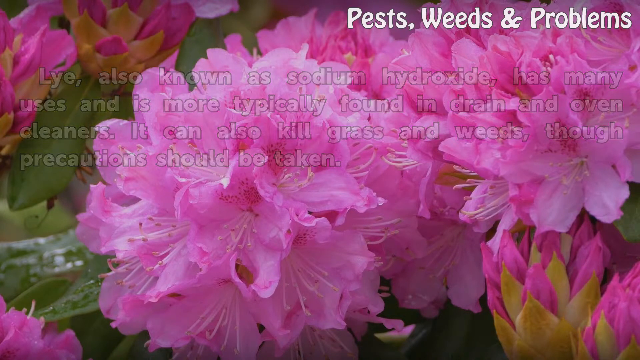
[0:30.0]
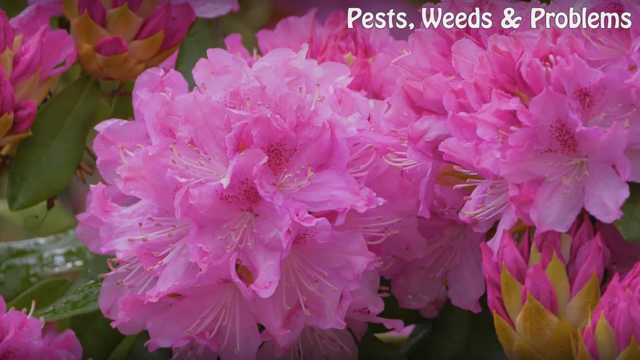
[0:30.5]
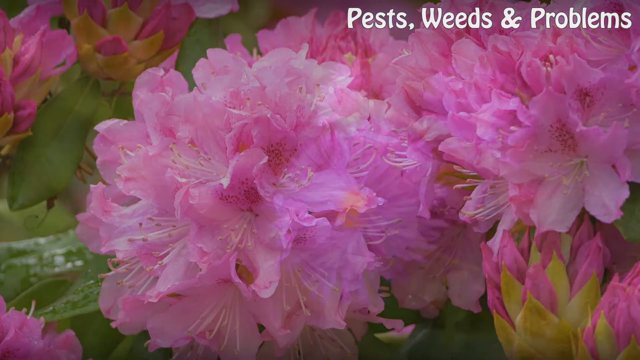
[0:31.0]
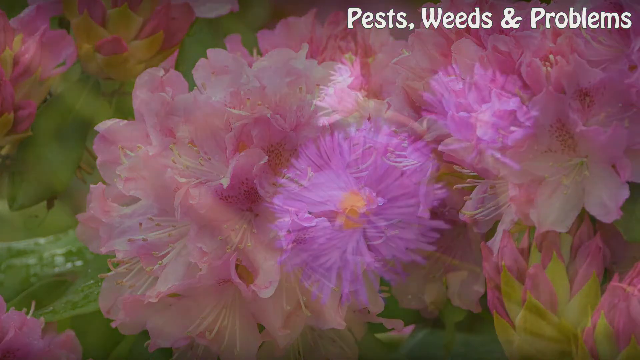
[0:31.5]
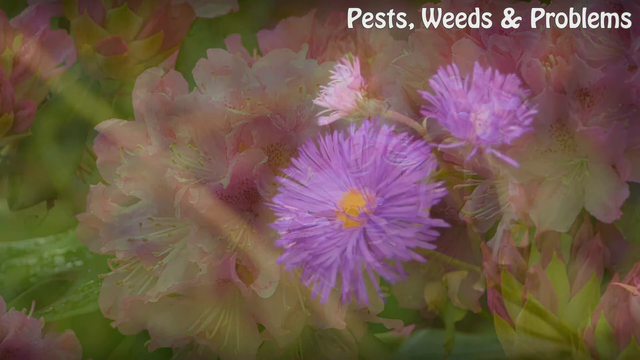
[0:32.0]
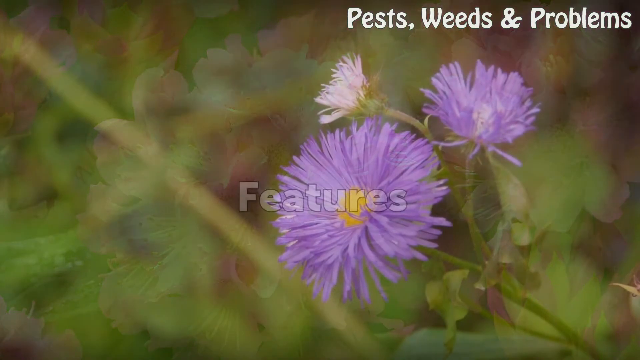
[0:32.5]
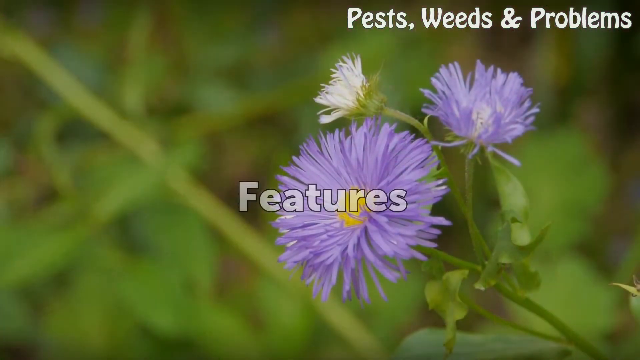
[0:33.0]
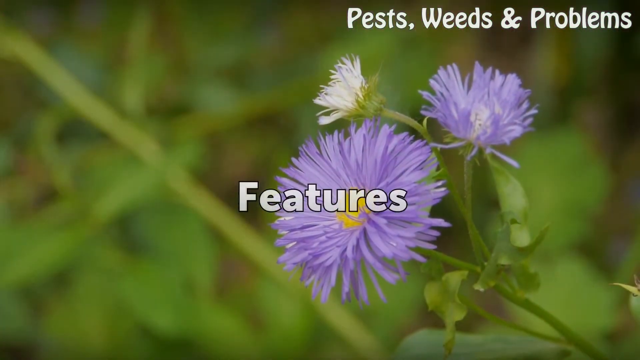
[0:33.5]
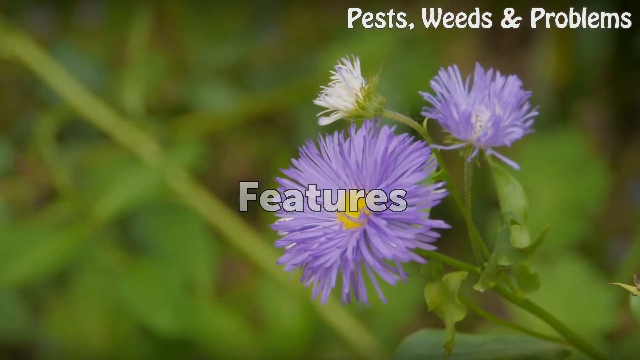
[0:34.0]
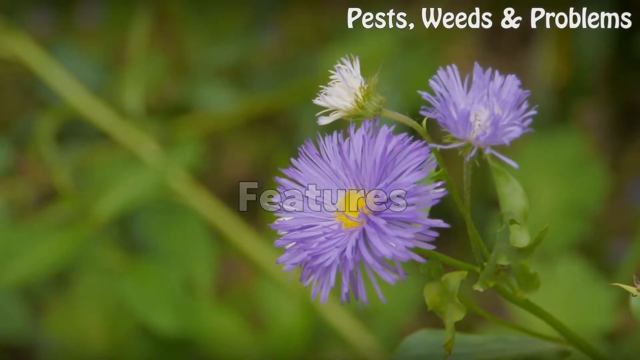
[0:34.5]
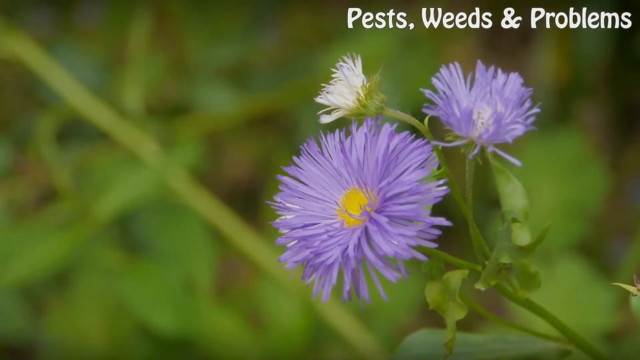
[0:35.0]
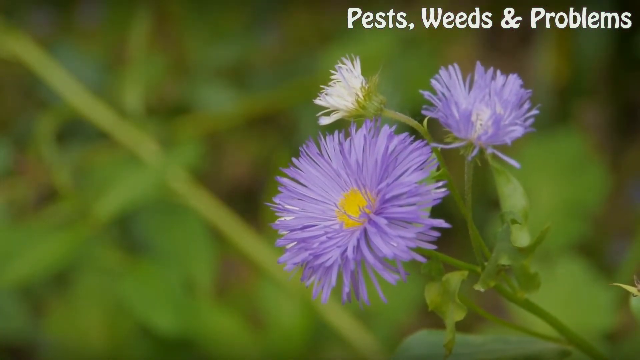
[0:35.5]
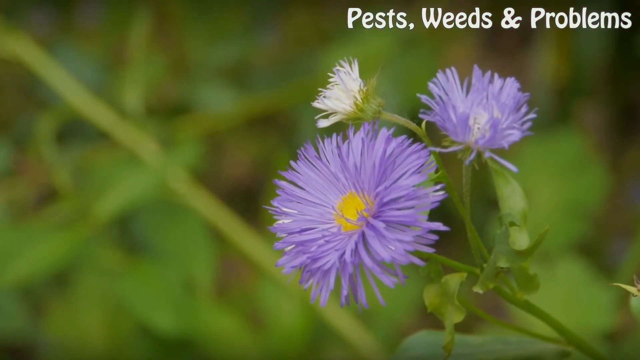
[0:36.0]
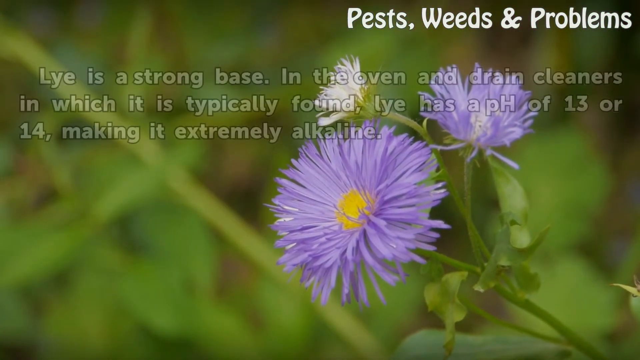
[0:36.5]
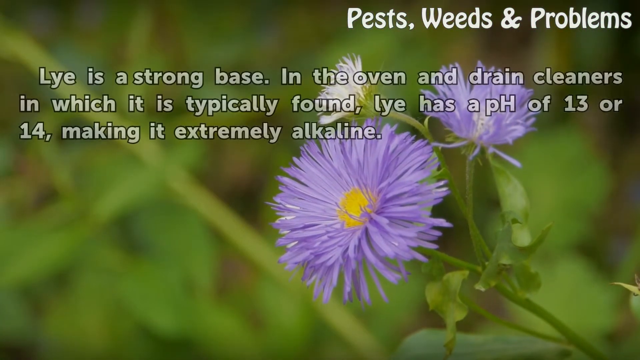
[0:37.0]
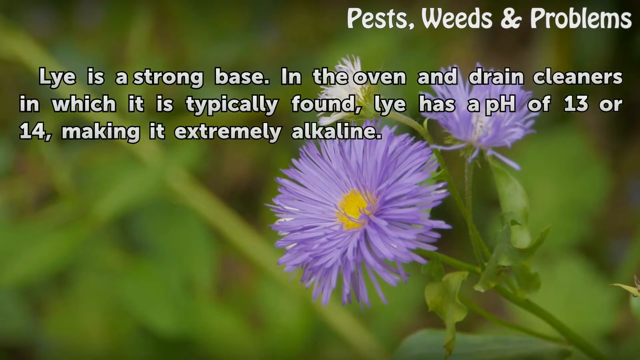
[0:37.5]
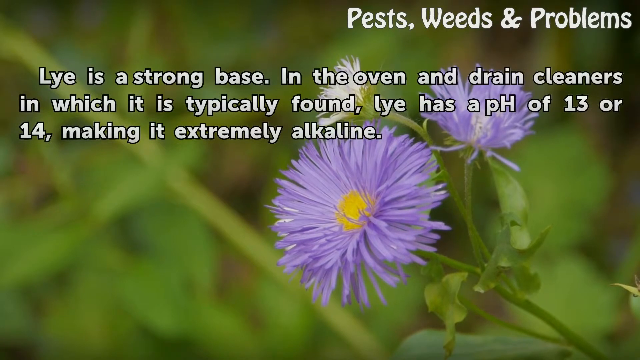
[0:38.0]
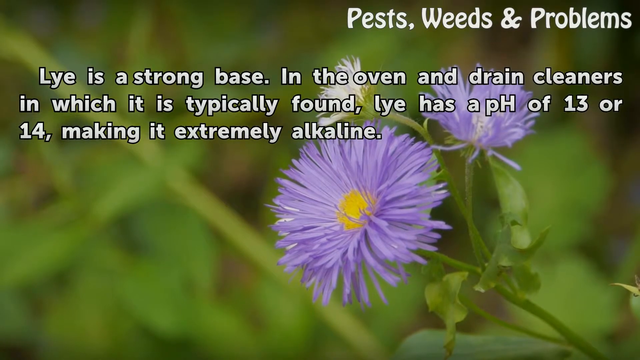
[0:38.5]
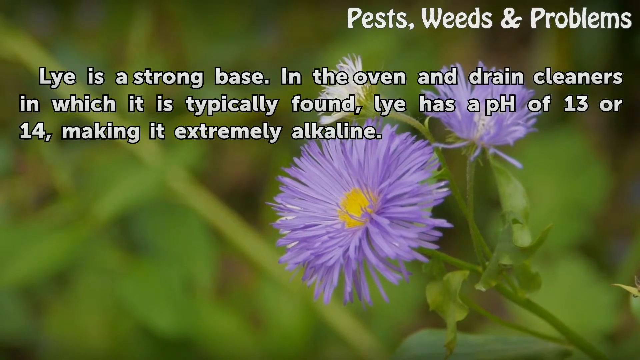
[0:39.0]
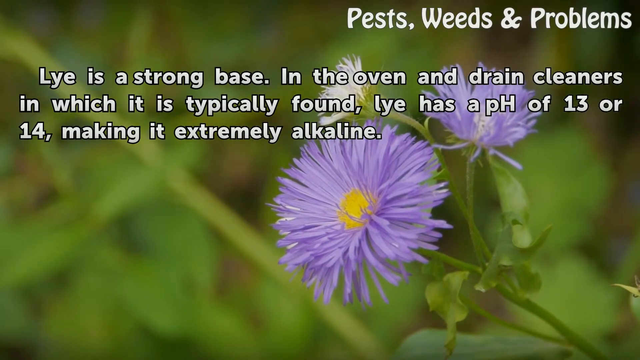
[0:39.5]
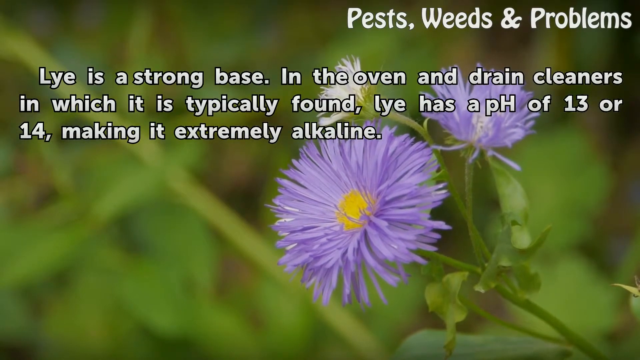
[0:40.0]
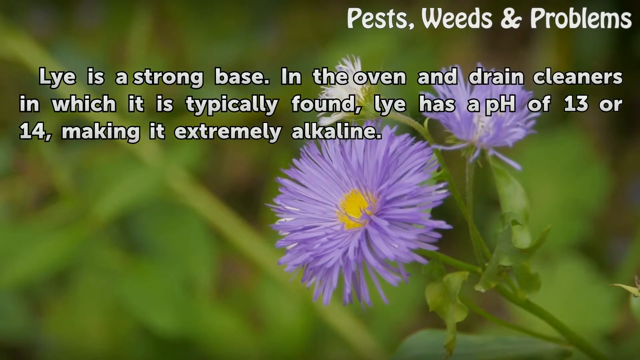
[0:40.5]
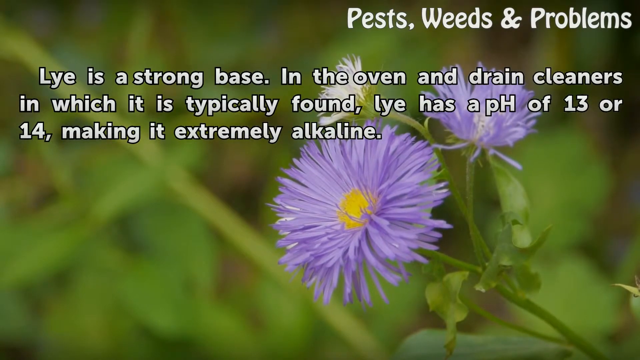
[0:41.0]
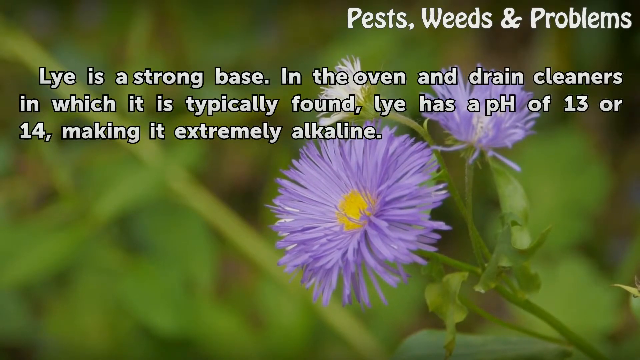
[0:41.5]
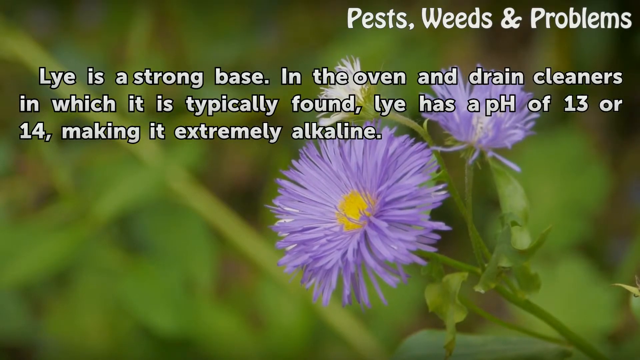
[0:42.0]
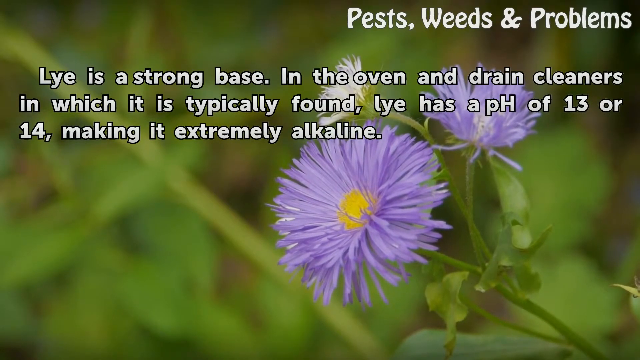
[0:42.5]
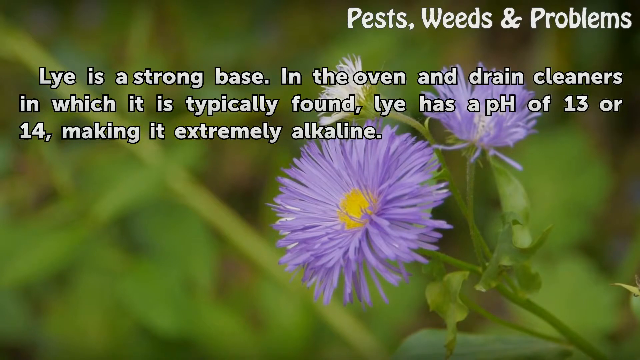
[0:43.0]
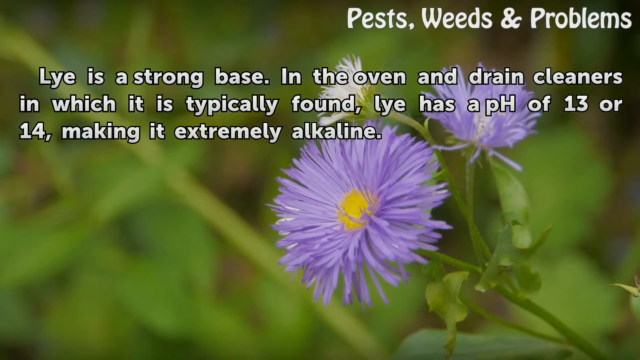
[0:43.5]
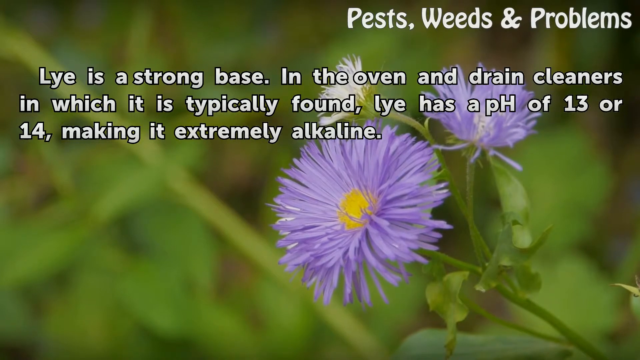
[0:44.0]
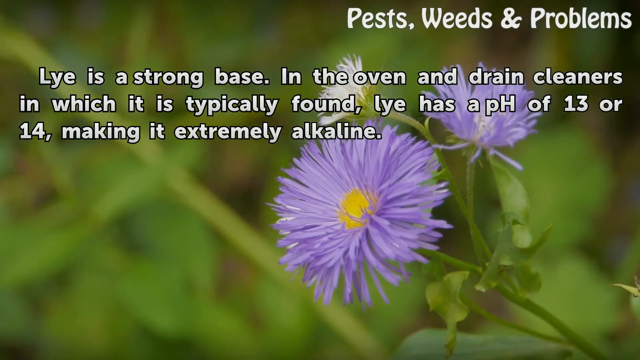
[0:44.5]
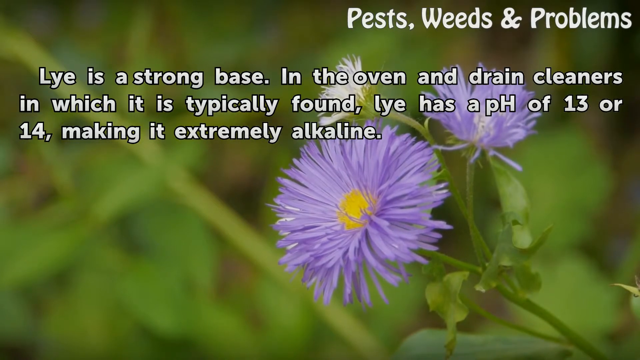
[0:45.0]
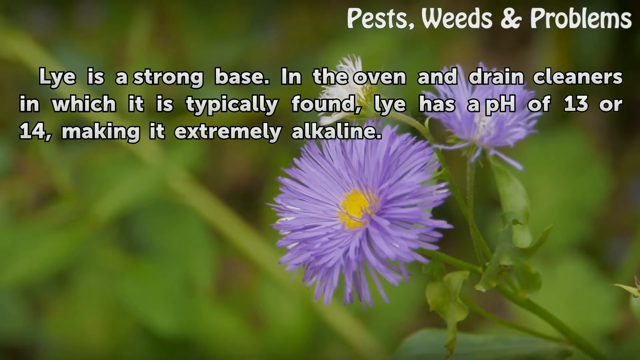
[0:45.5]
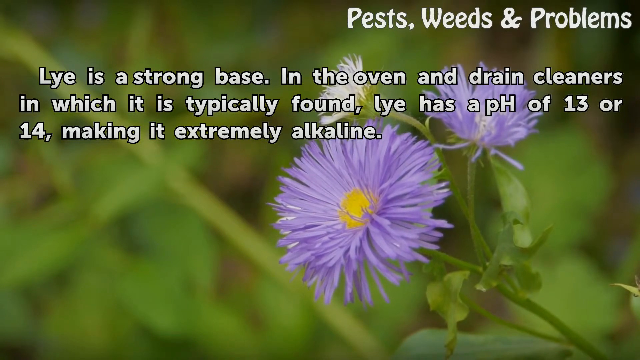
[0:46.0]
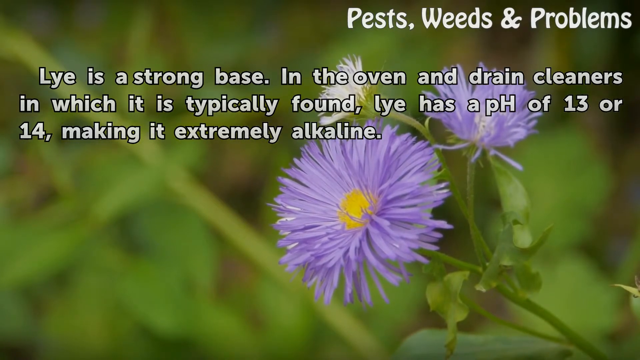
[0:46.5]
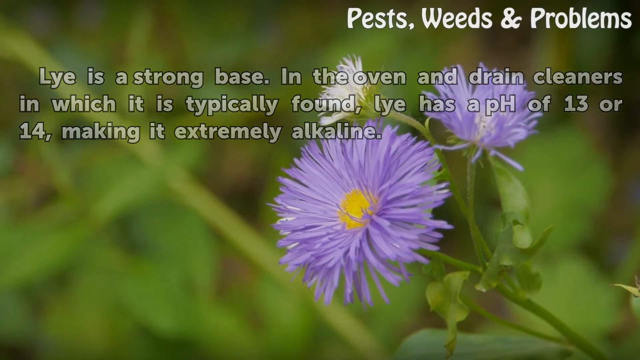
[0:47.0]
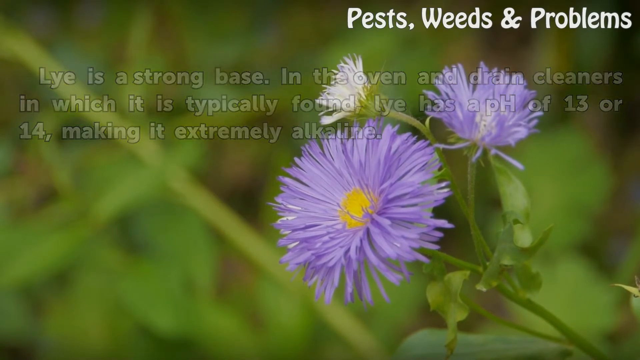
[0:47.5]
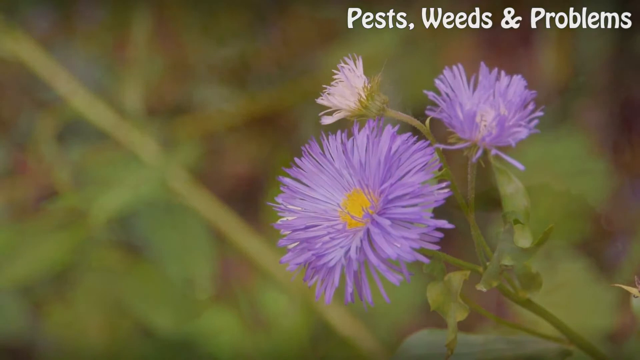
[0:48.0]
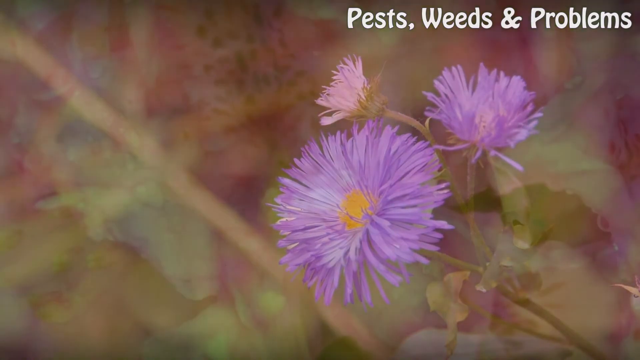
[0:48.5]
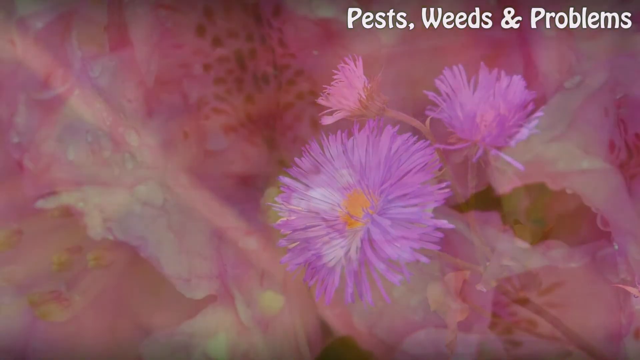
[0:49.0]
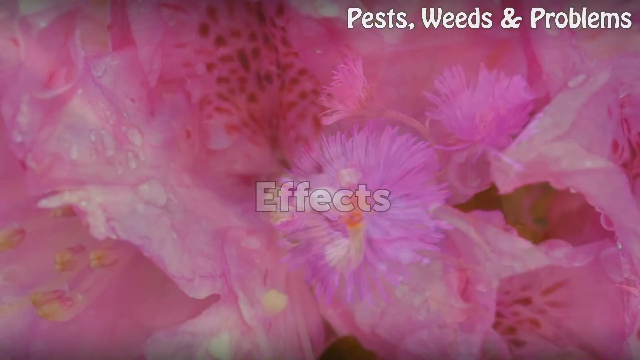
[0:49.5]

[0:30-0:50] The text fades away, leaving just the pink flower, before the background fades to reveal a new image of two small blossoming purple flowers with yellow centers and a small, white, dandelion-like flower. A "features" title fades onto the center of the screen and then fades away, replaced by a block of white text with black borders at the top of the screen. It begins "Lye is a strong base" and continues "Lye has a pH of 13 or 14, making it extremely alkaline." The background image is slightly blurred. The text fades away along with the background image, which turns to a zoomed-in image of another pink flower, and an "effects" title is displayed. The Pests, Weeds, and Problems logo remains in the top right corner of the screen.